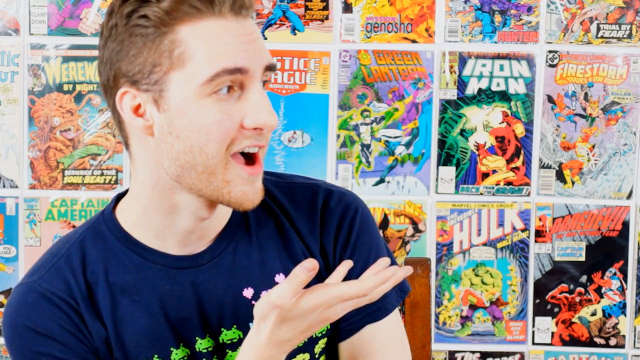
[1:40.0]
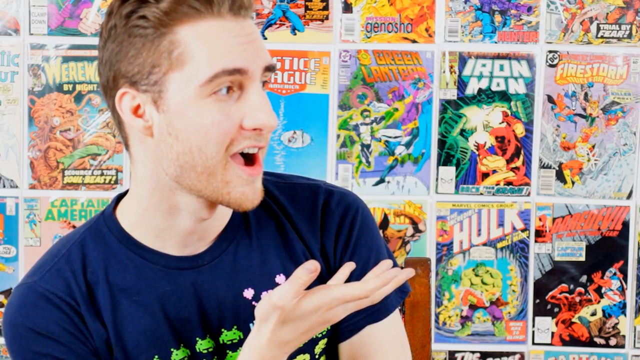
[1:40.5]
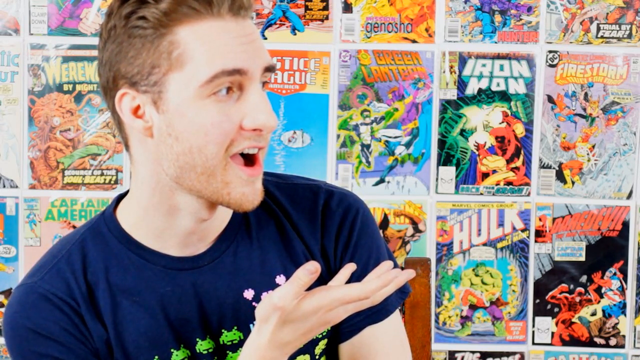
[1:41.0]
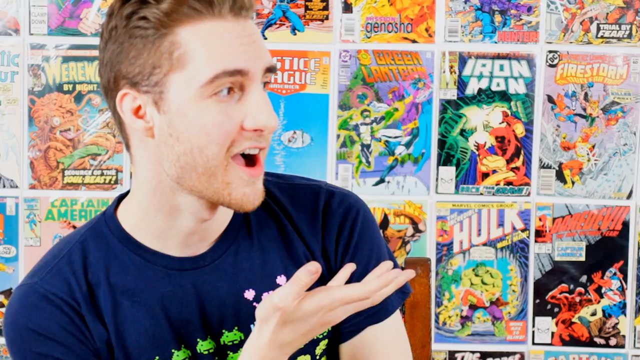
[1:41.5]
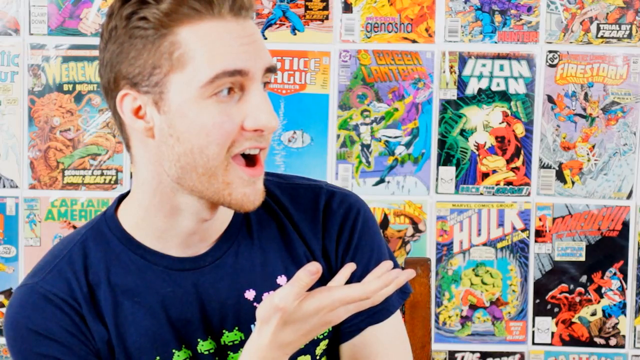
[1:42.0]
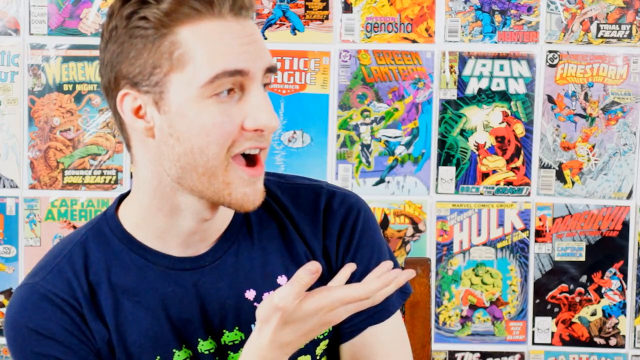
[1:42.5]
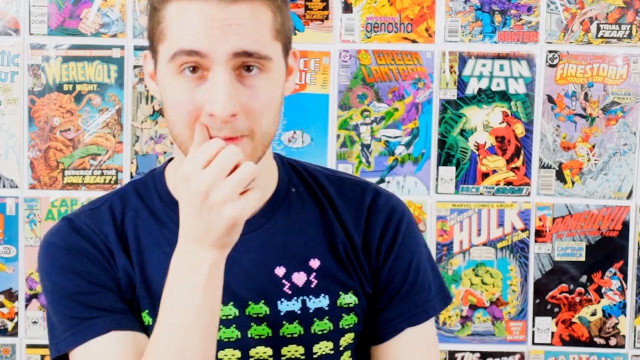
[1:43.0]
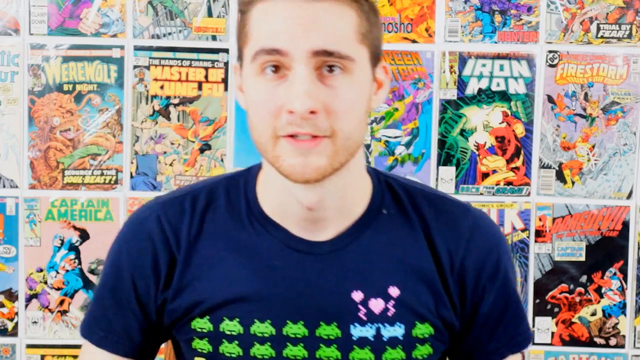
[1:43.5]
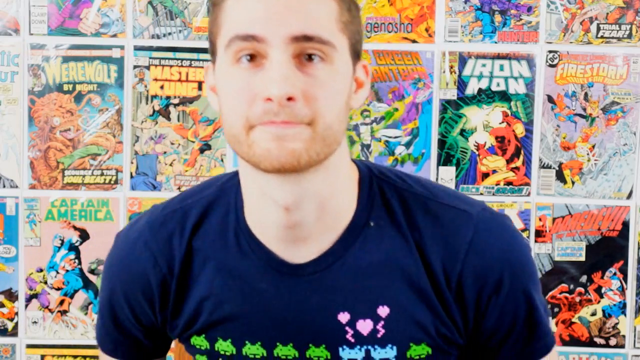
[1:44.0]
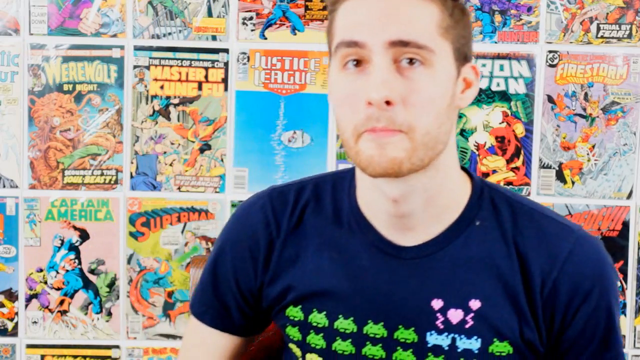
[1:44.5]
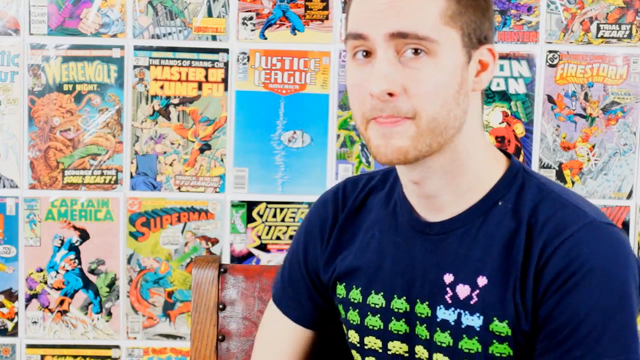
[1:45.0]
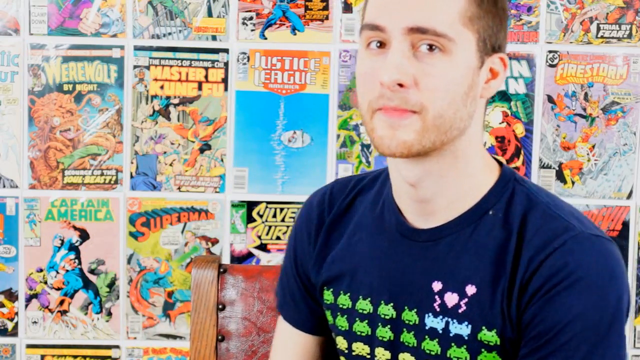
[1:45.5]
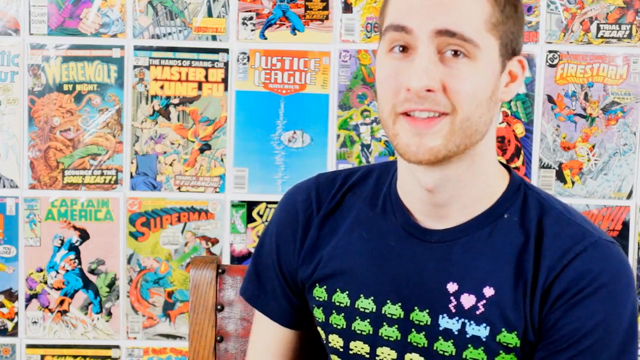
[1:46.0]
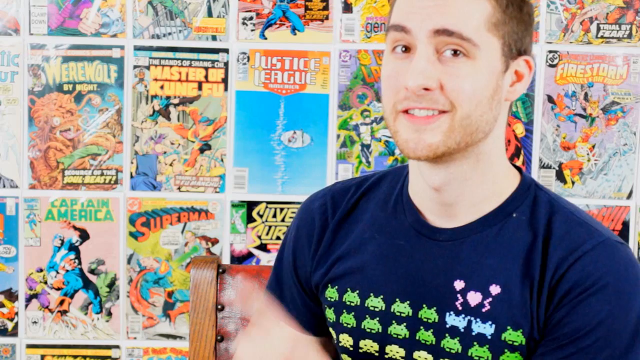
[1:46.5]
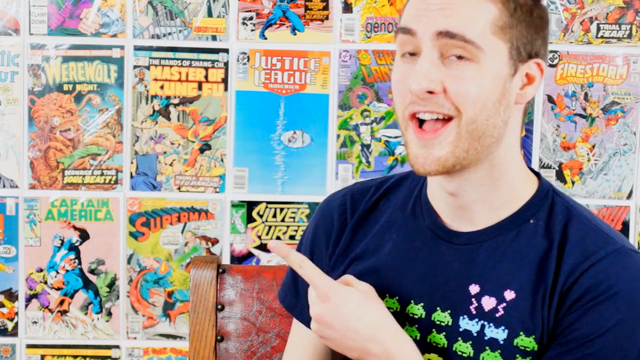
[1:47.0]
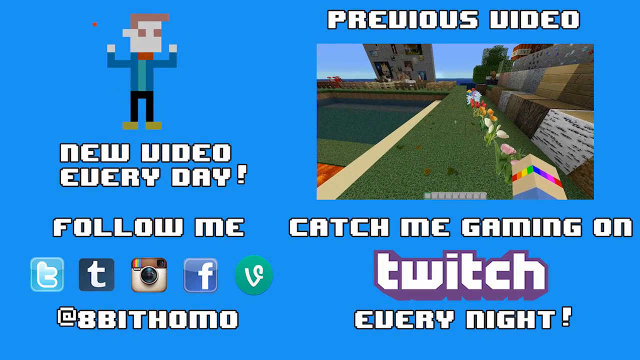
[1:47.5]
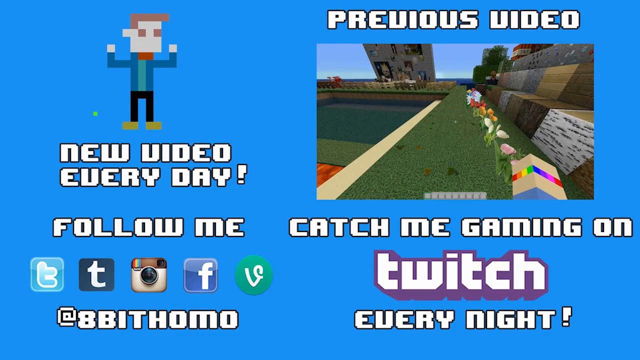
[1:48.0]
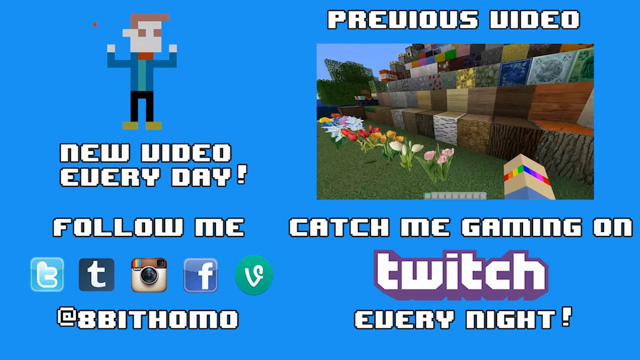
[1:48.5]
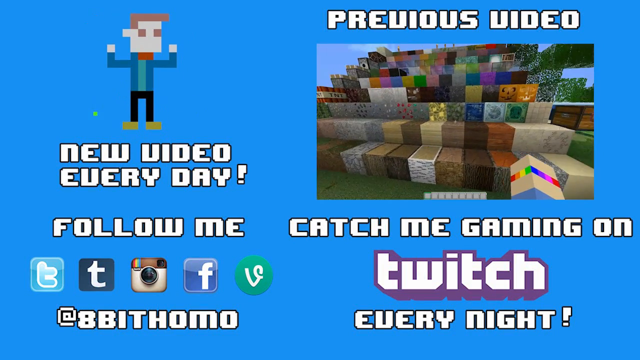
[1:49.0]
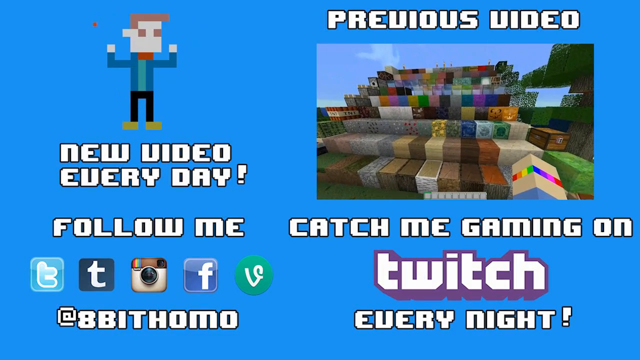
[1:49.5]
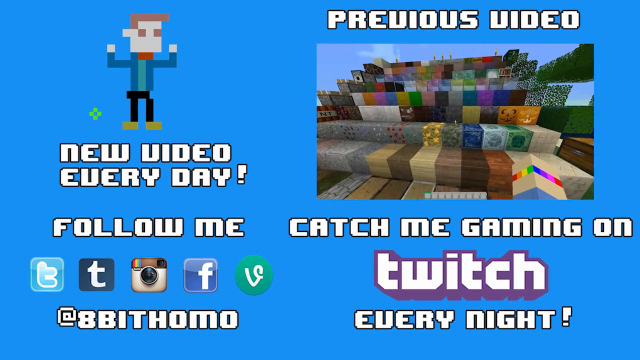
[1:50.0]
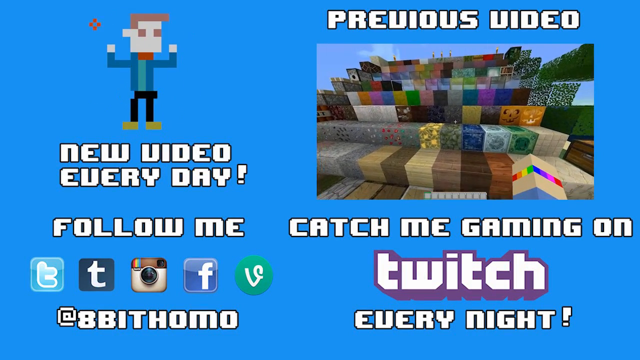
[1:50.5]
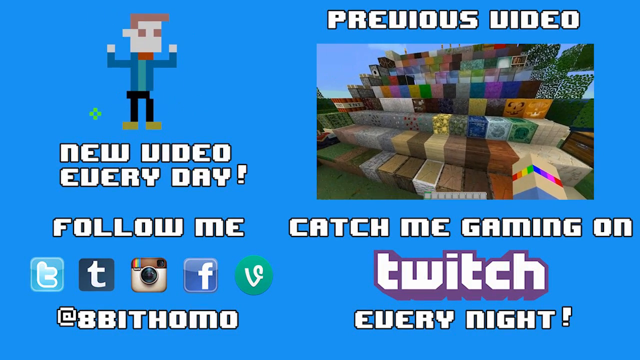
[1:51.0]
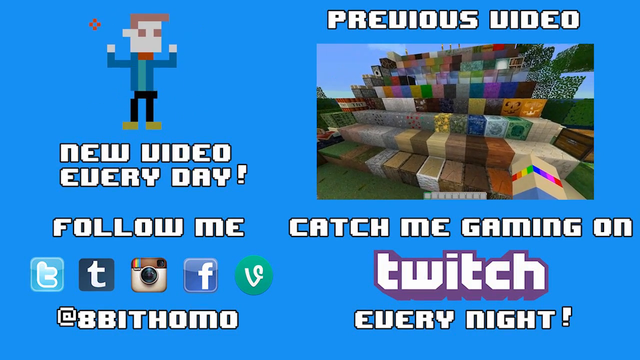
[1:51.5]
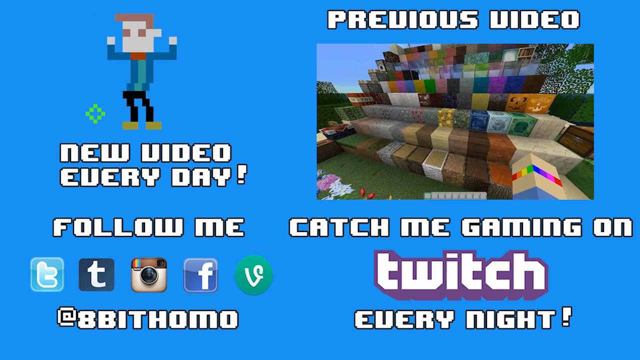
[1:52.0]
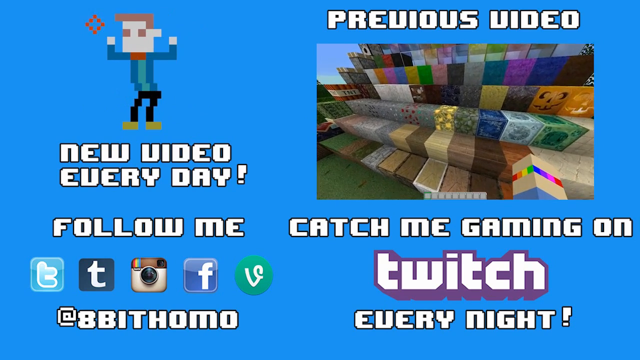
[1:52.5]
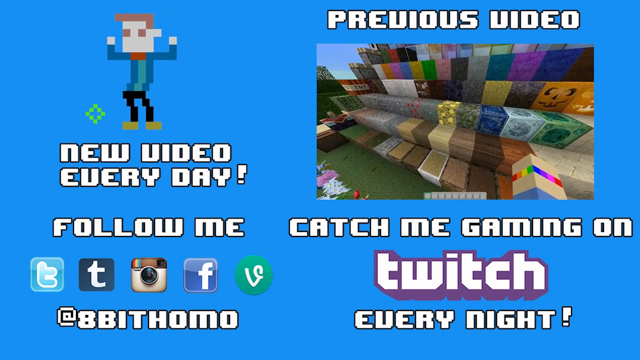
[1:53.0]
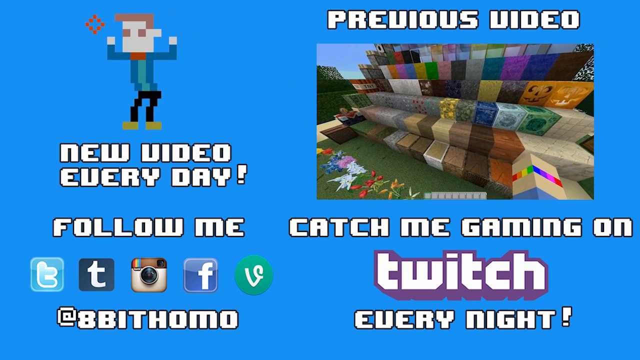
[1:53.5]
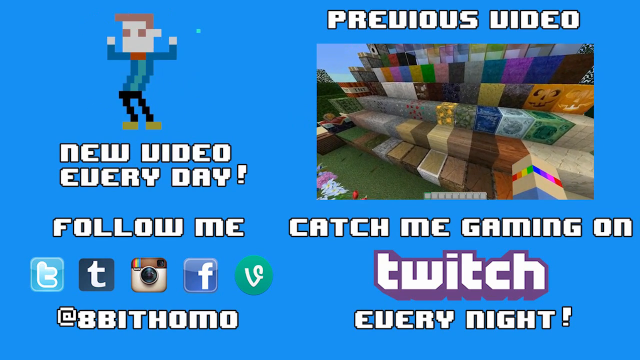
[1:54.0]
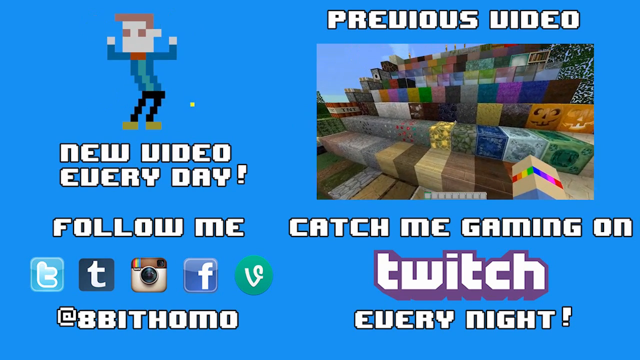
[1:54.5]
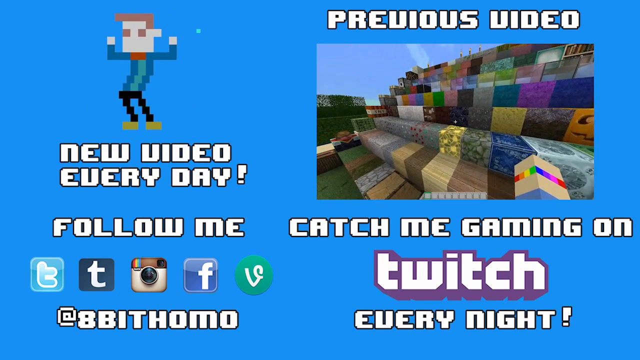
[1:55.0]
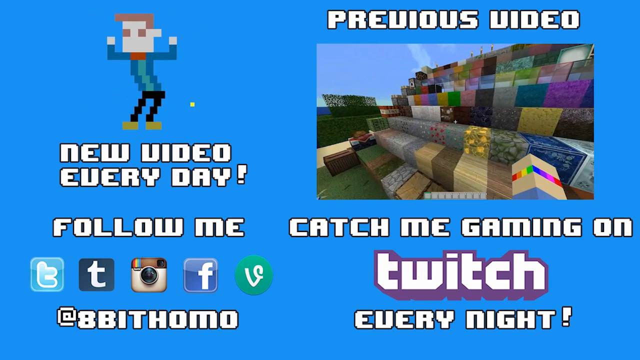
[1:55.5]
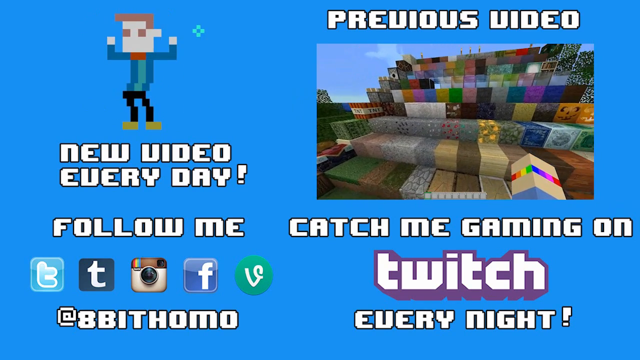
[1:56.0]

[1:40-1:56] The person remains in the same position, head turned to the left, his face seen mostly from the side, mouth open, hand out, looking at the comic book covers. He turns back to the right, showing his face and upper torso from the front, then turns to the other side and points to the comic book covers on the left side of the frame. A closing screen with a light blue background appears. It reads "previous video" with a Minecraft image below. To the left is a very animated, blurry character that moves as if dancing, with "new video every day" below it. Below that is "follow me" with five social media icons. To the right is "catch me gaming on" followed by the Twitch logo, with "every night" below.